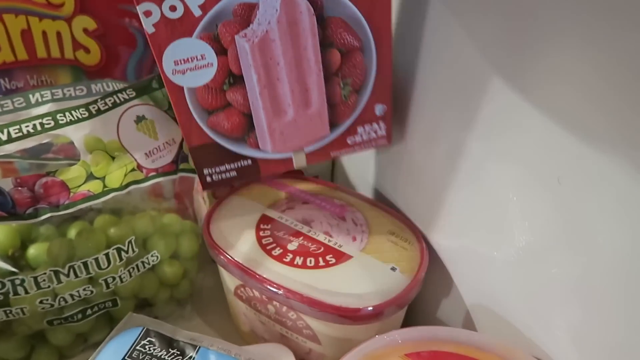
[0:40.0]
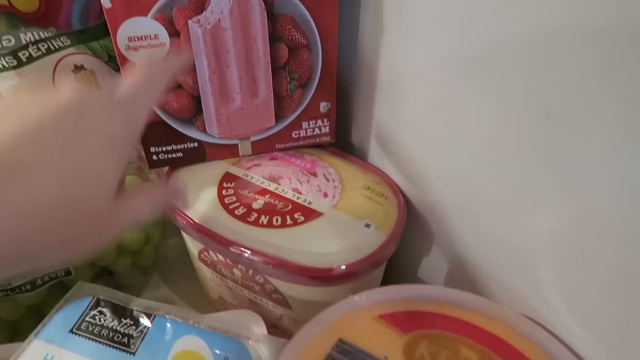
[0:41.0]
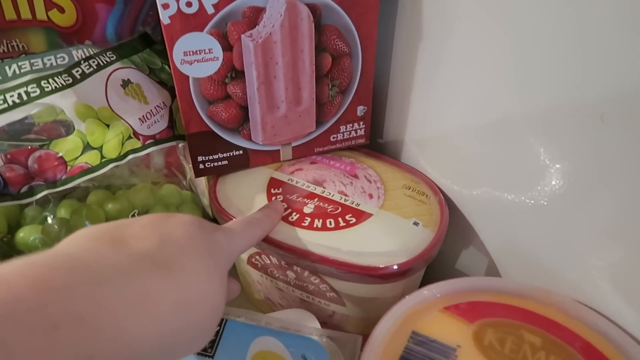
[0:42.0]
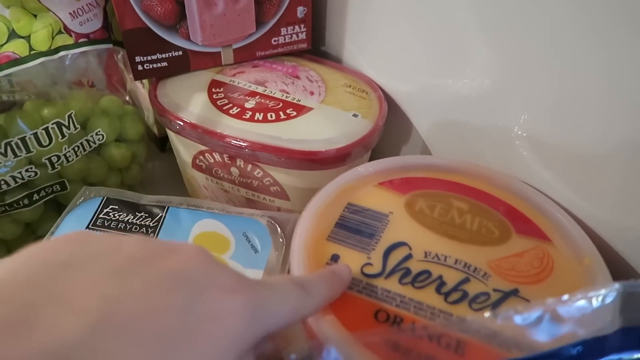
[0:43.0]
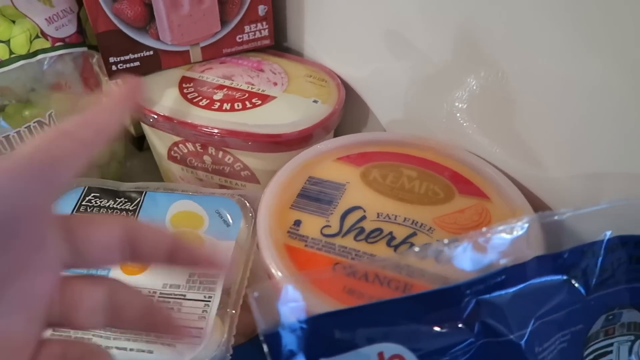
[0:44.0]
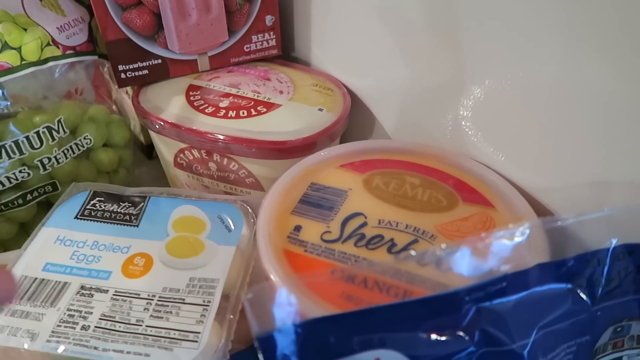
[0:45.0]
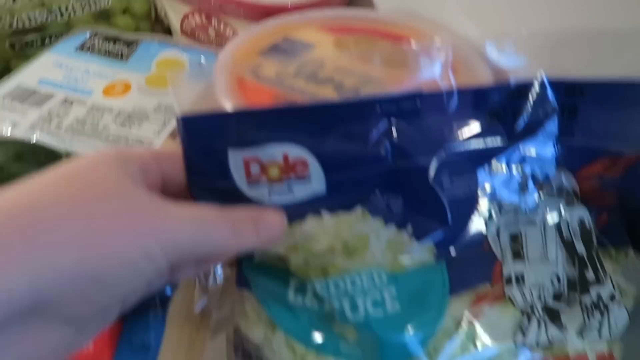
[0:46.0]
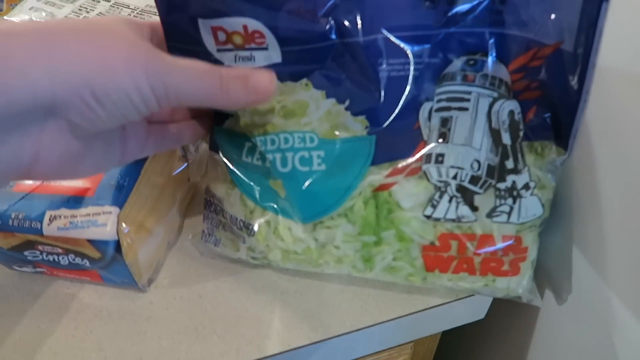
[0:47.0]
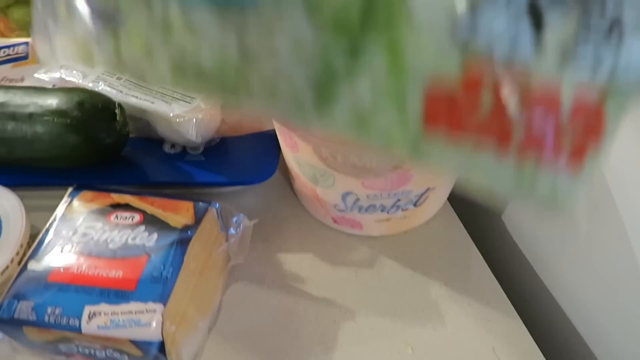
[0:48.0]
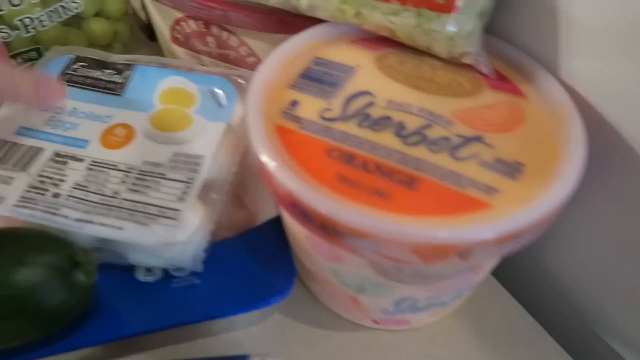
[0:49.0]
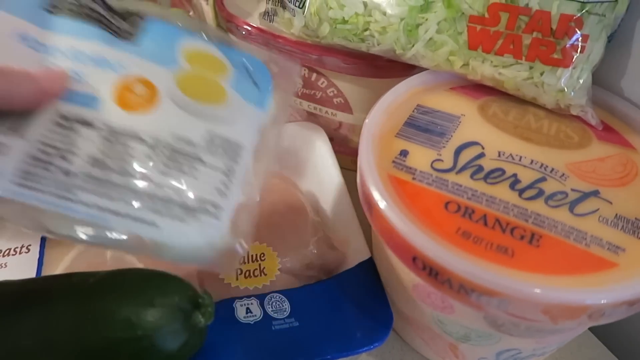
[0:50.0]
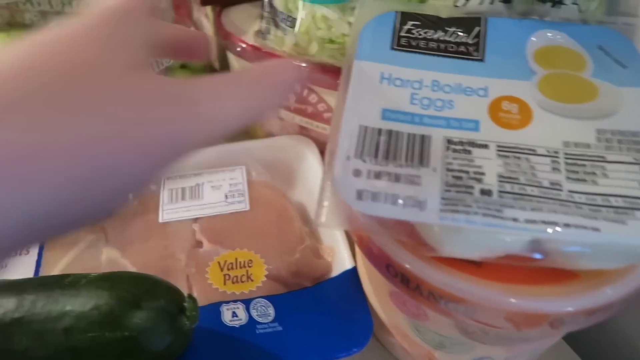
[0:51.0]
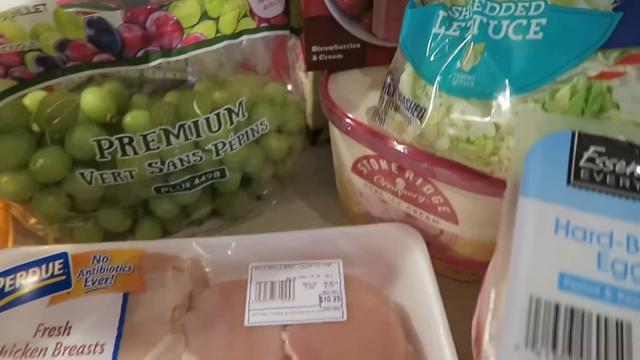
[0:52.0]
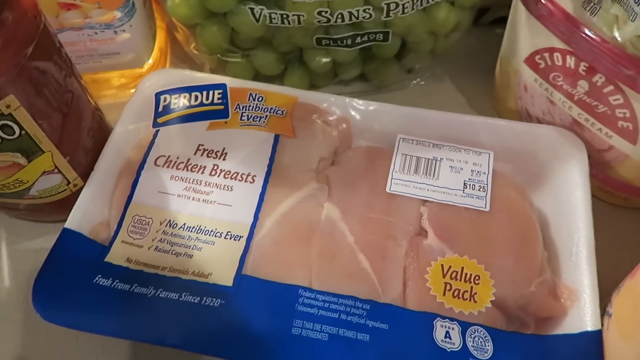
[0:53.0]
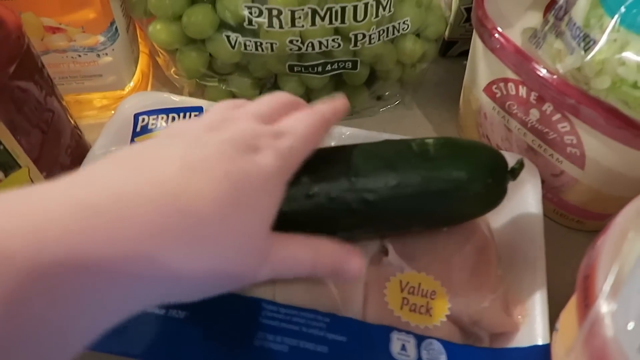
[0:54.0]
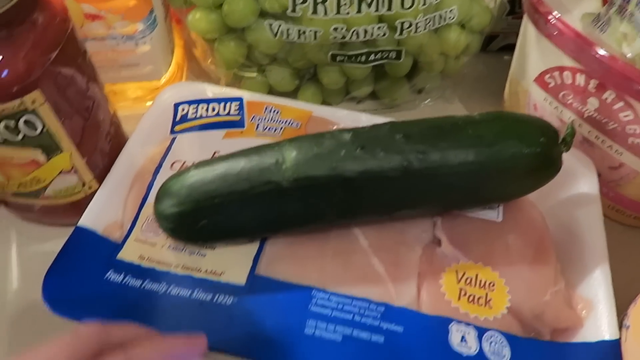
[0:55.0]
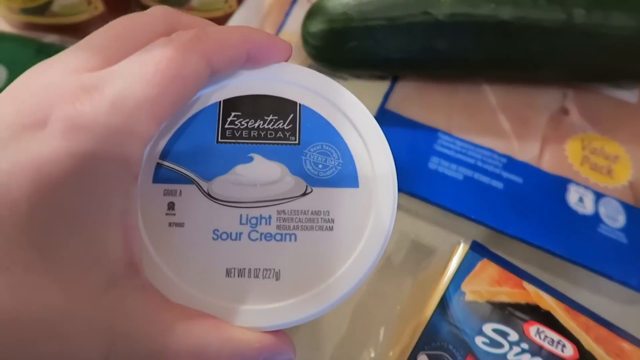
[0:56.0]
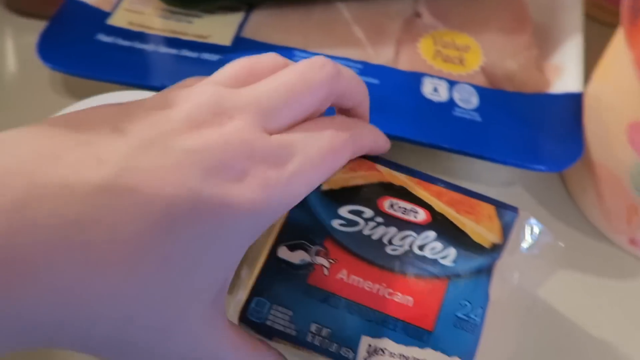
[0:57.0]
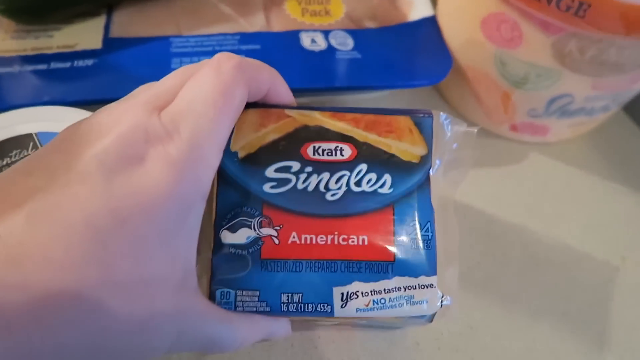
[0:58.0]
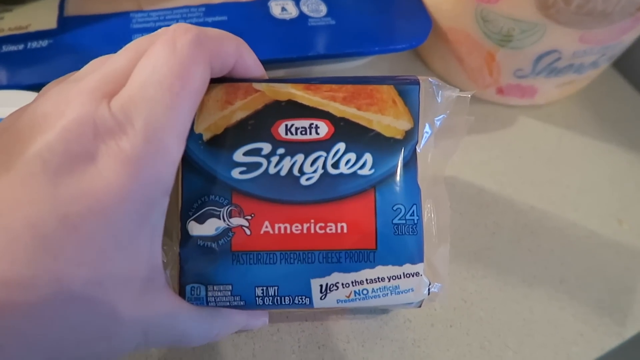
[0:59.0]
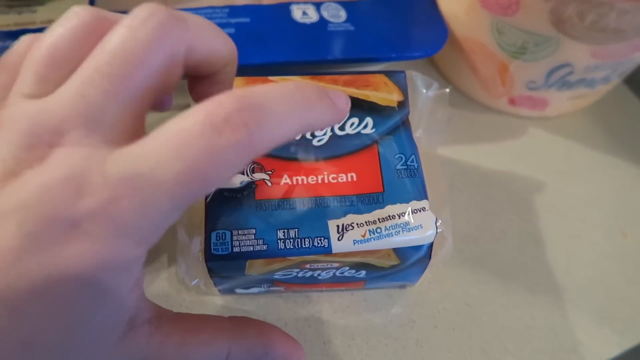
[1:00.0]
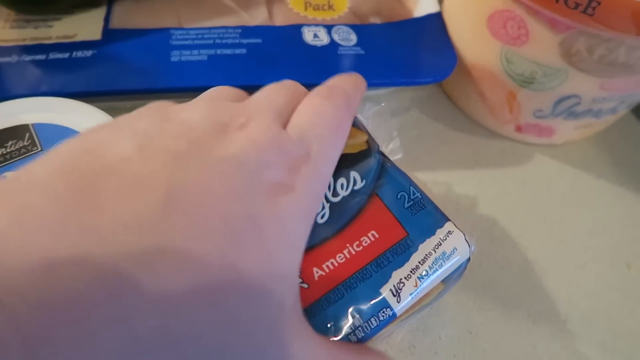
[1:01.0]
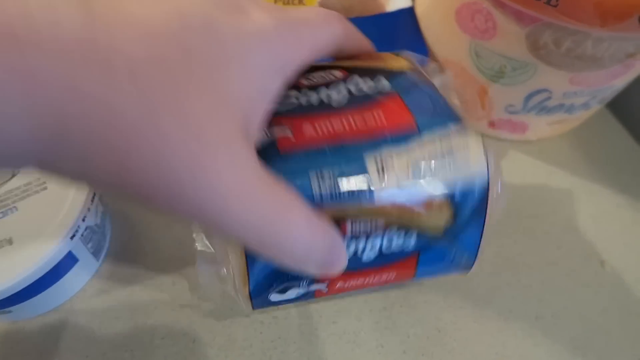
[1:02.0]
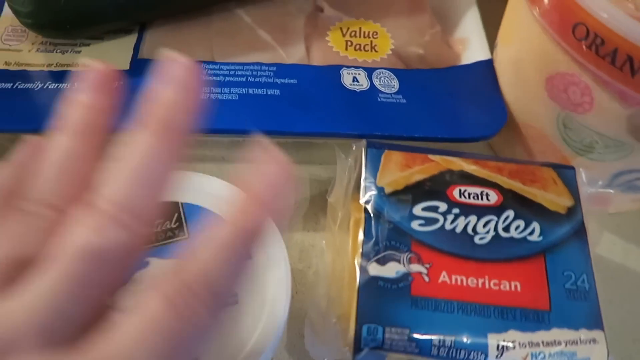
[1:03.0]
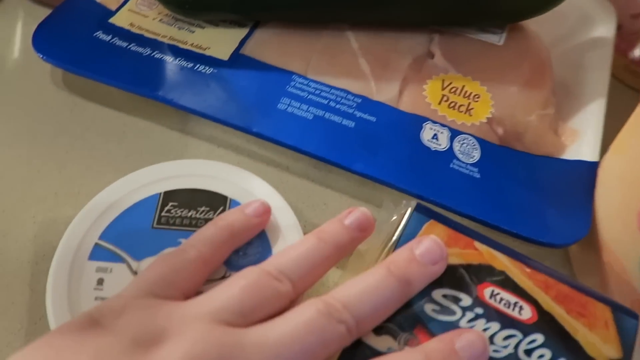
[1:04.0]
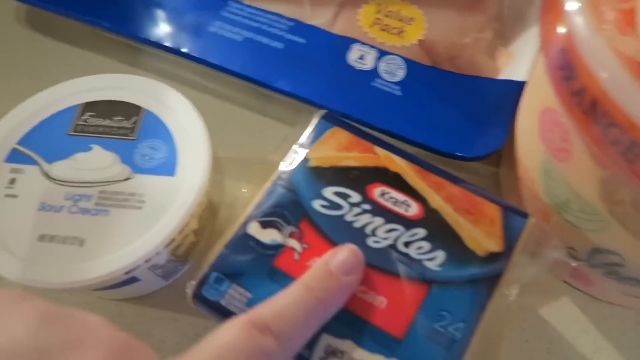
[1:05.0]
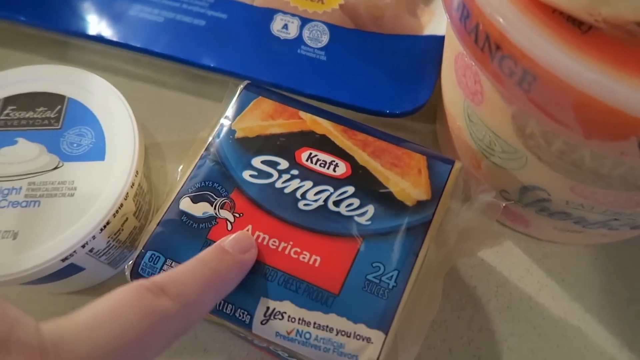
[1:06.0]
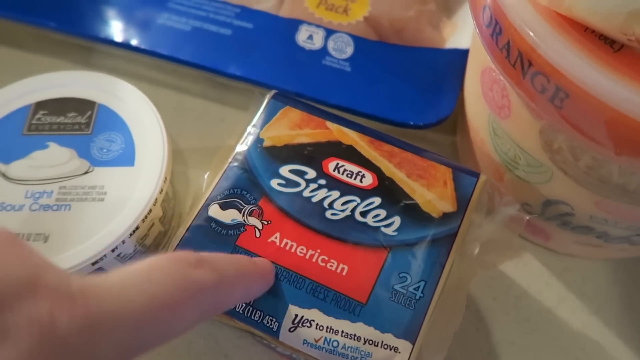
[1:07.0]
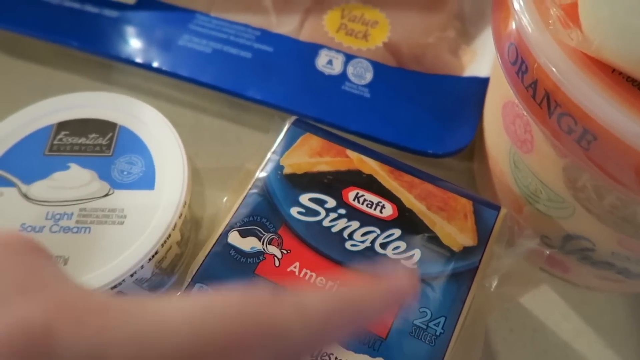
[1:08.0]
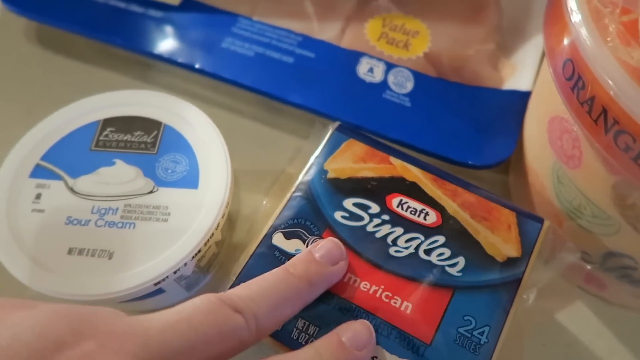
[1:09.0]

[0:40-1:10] The hand points a finger at the container of ice cream, which says "Stonebridge real ice cream"; the ice cream appears to be pink with bits of maybe red fruit in it. Next to it is another ice cream tub, a fat-free sherbet, apparently orange, with "orange" on the top. The hand then holds a bag of Doll fresh shredded lettuce that is Star Wars themed, with a Star Wars logo and character on the packaging. The hand puts it on top of the ice creams, and a package of hard-boiled eggs is also put on the ice creams. This reveals a pack of chicken, and the hand puts a courgette on top of the chicken. It picks up a container of light sour cream and puts it down, then picks up Kraft singles American cheese and puts it down again. The hand pats the light sour cream and the singles cheese together and taps the singles packaging.